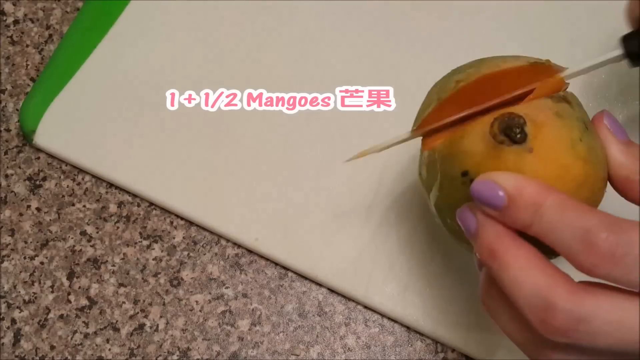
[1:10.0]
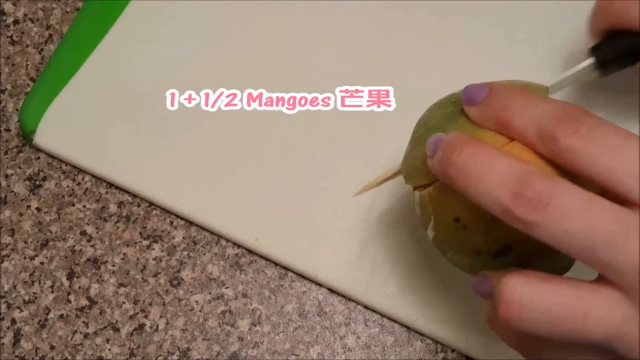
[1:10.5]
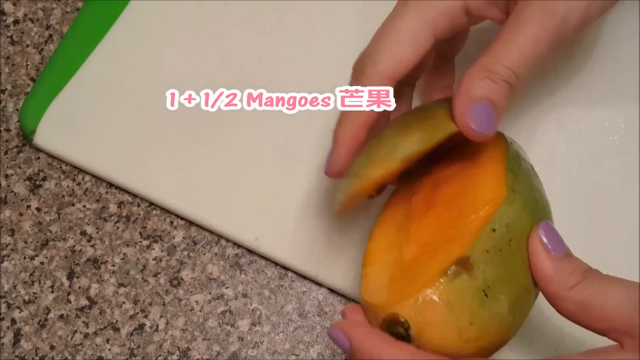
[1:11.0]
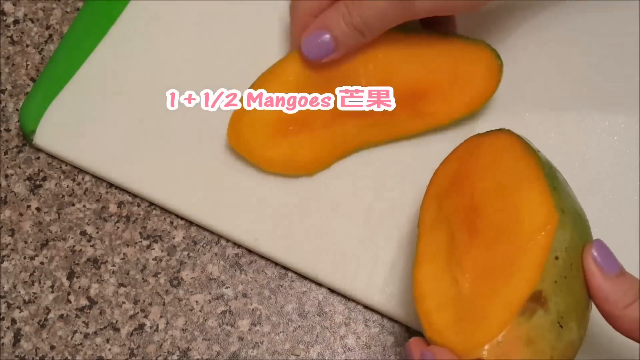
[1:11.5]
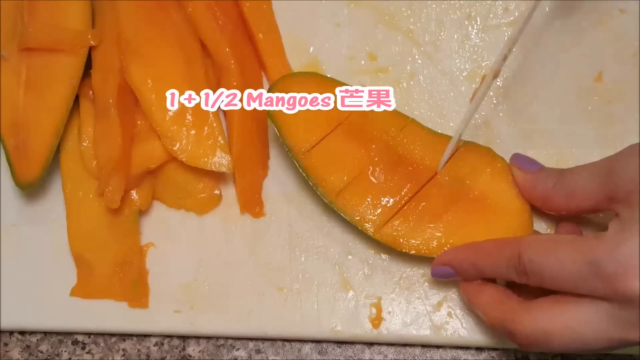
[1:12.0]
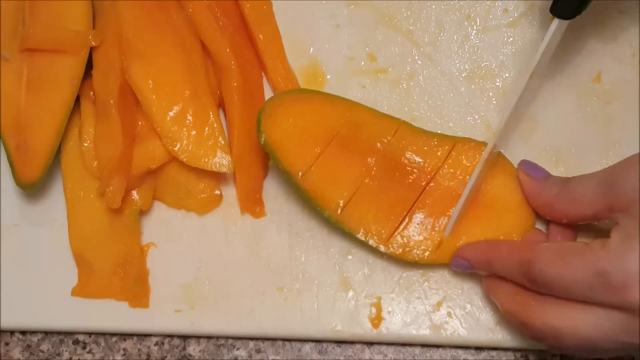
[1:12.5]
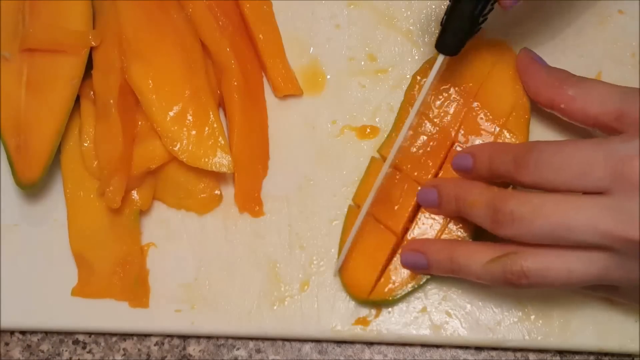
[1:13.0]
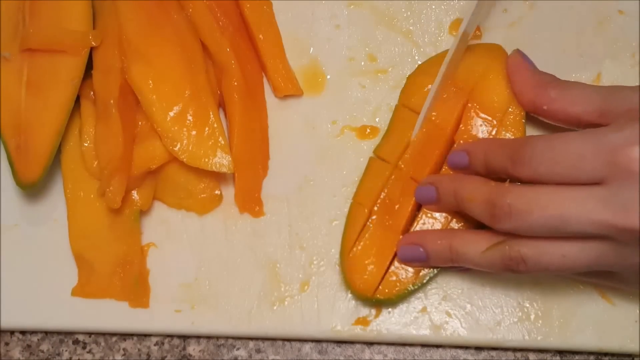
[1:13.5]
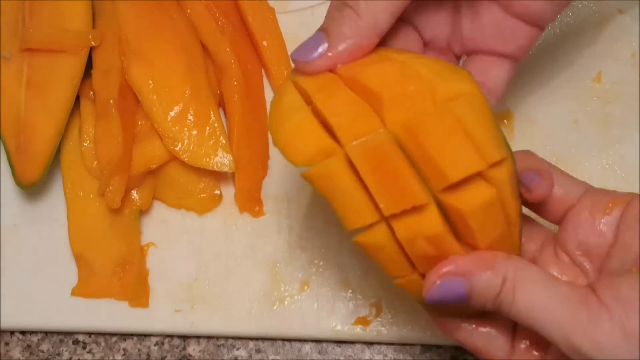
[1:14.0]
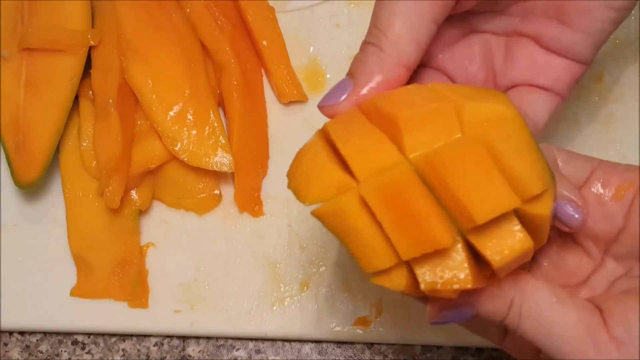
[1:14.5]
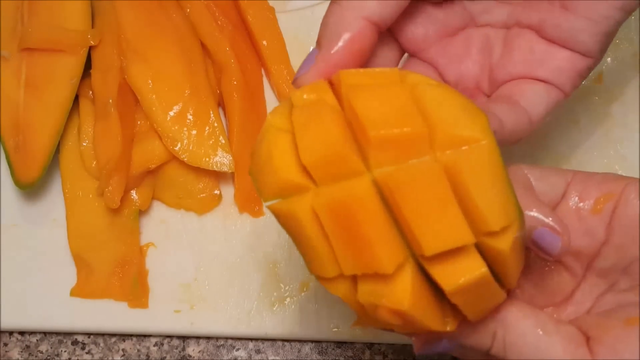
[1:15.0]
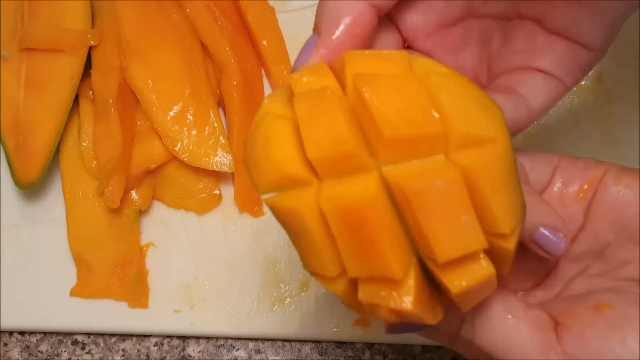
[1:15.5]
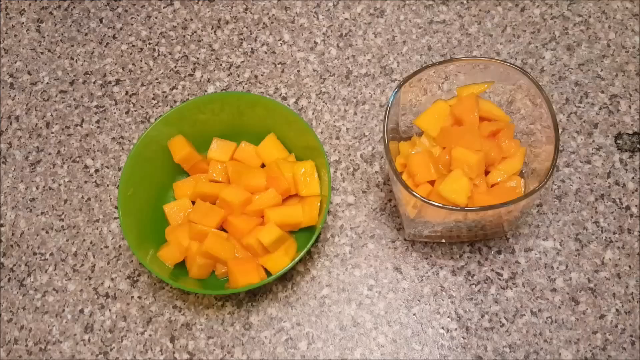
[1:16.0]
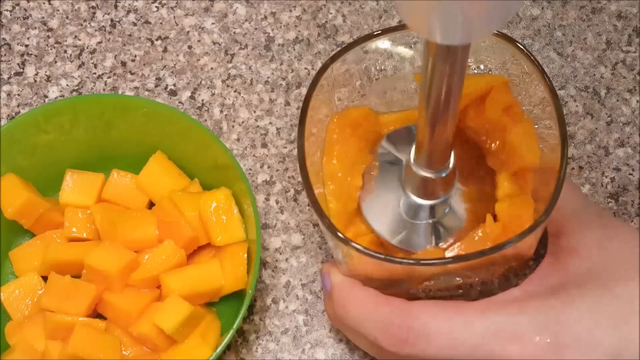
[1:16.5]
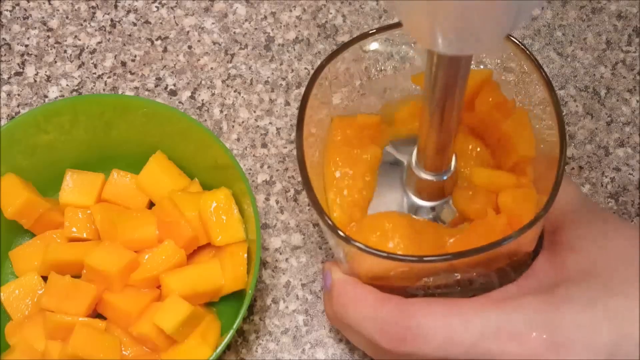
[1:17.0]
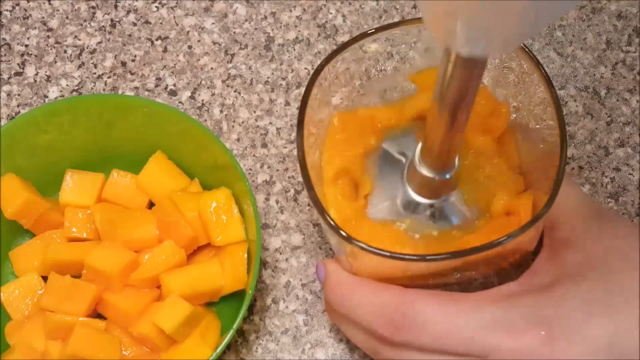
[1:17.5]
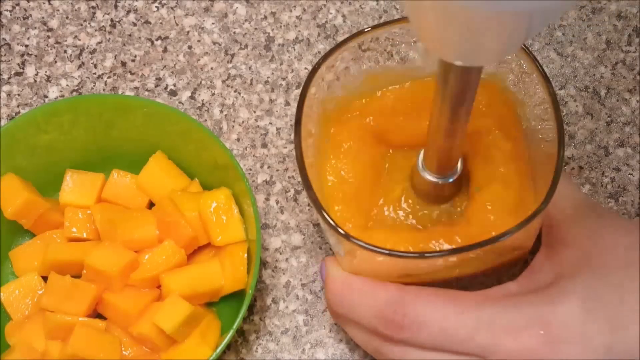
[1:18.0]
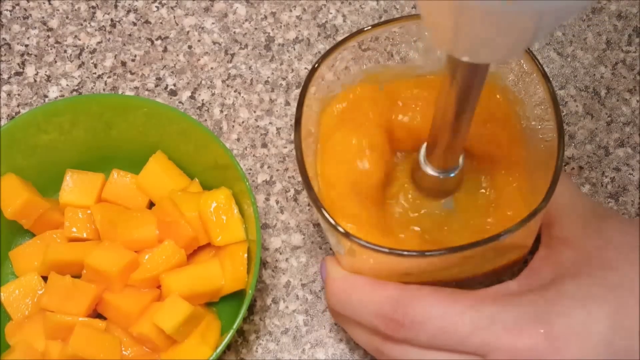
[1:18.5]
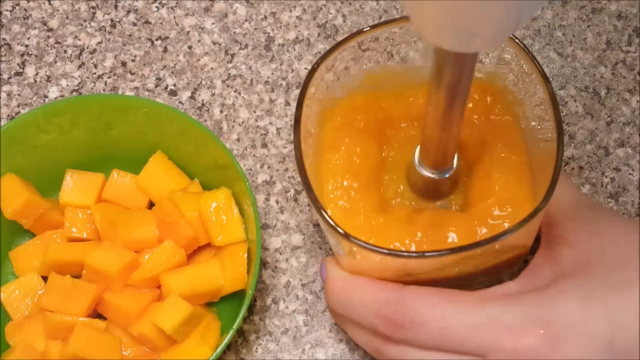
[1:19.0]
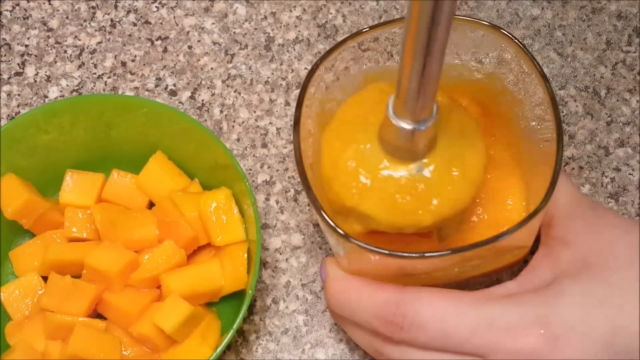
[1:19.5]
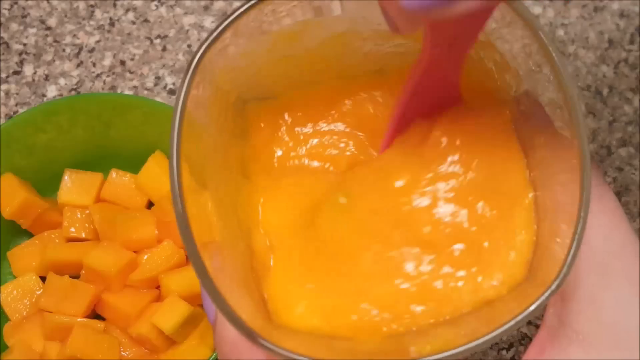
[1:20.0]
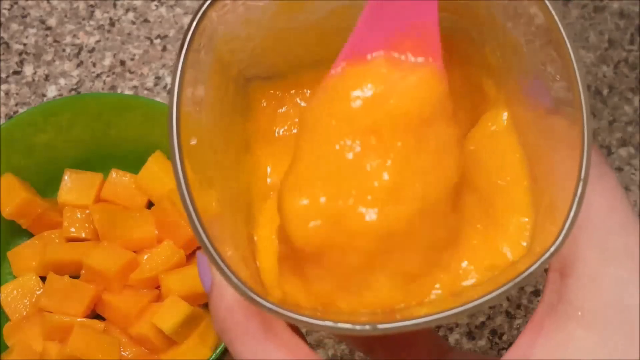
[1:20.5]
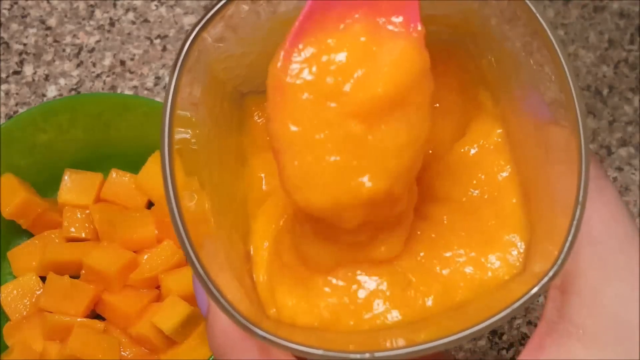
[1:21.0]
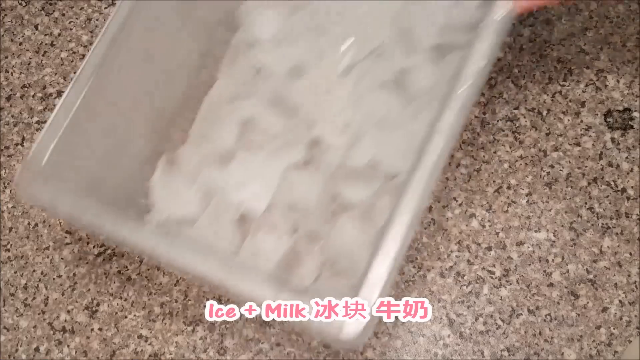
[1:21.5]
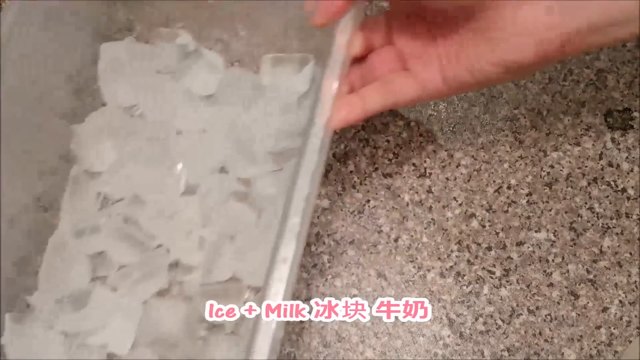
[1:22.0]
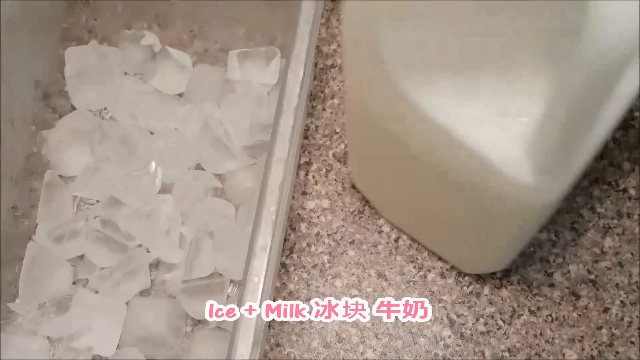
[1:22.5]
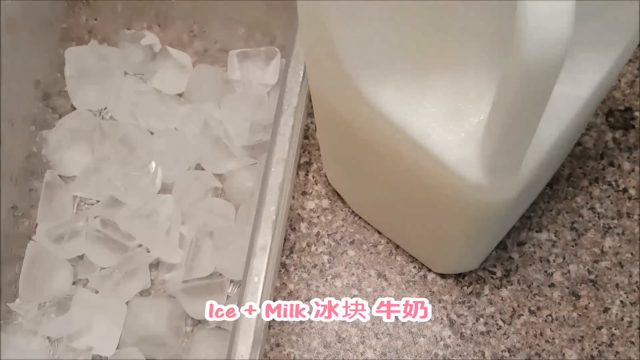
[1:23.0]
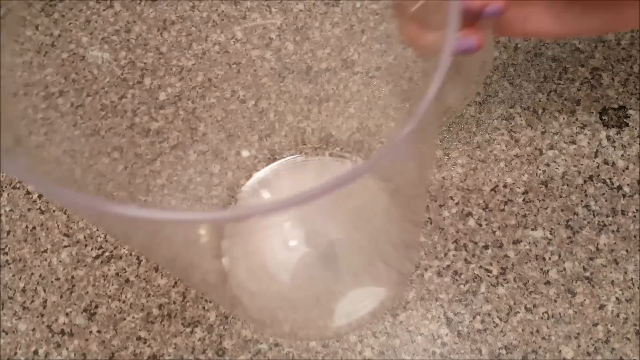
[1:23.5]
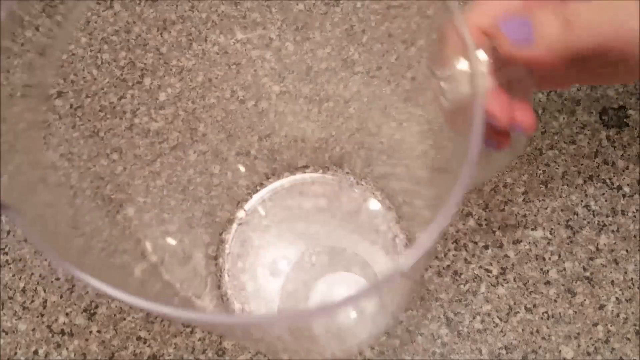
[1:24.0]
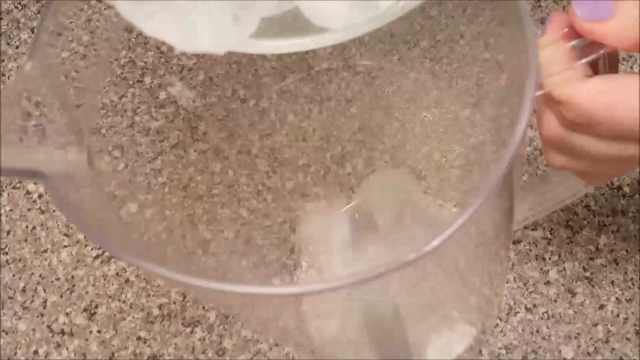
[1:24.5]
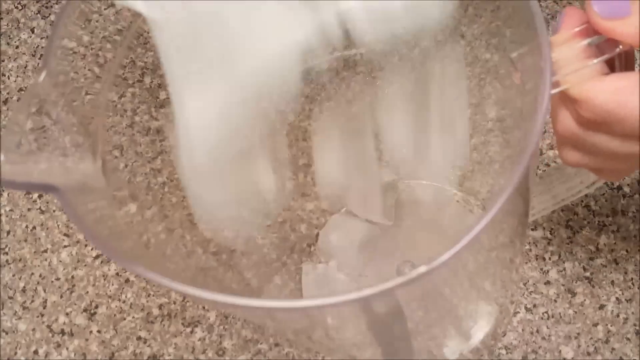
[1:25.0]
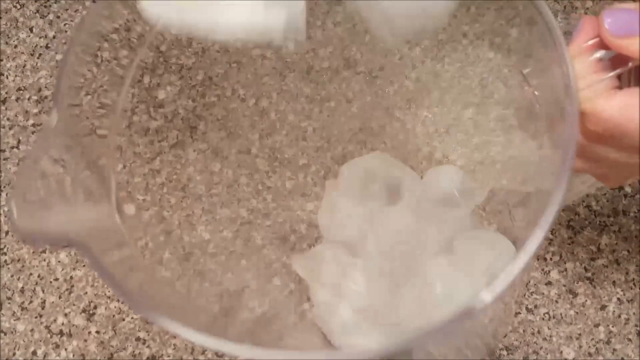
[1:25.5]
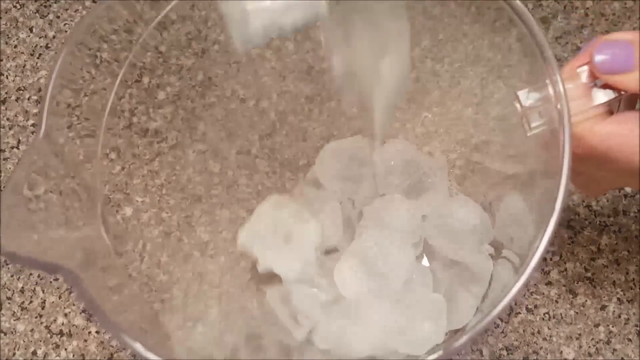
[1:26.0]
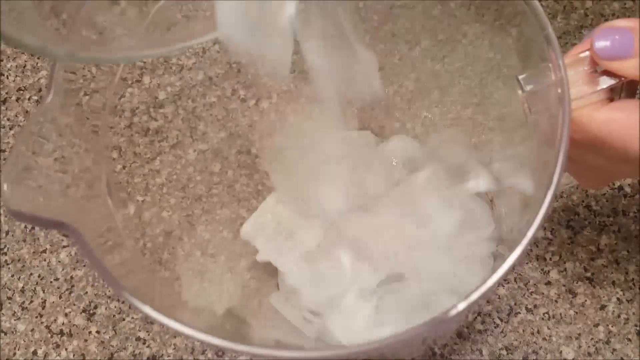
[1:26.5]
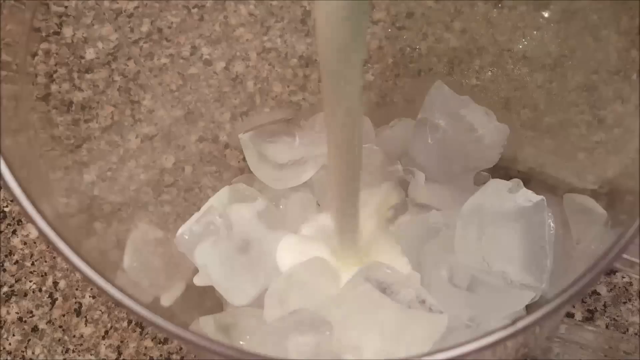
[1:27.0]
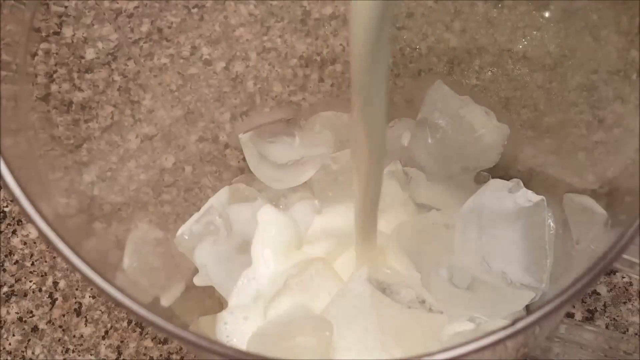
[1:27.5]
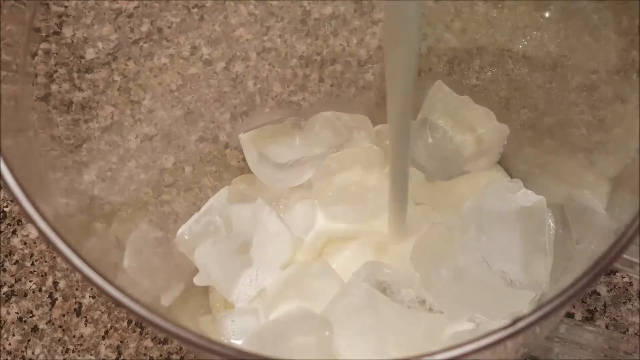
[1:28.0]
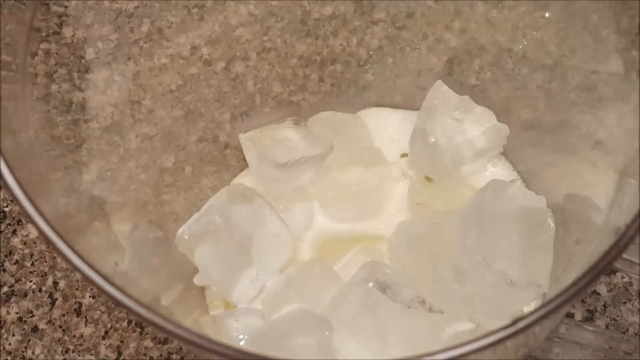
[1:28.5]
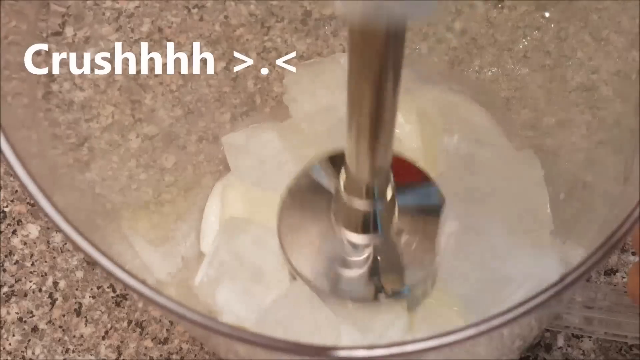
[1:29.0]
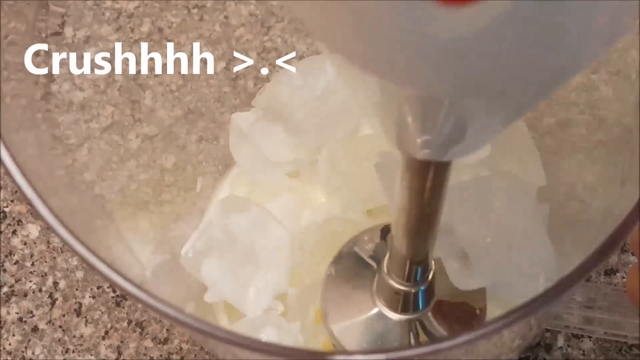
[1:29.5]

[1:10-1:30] The person cuts up the 1 1/2 mangoes with a small, apparently plastic knife, creating rough mango cubes to put on top of the mango ice cream. Fresh mangoes are blended into a sort of mango puree. Ice is put into a large cup with some milk, and the ice and milky mix are crushed, in preparation for making the mango shaved ice.